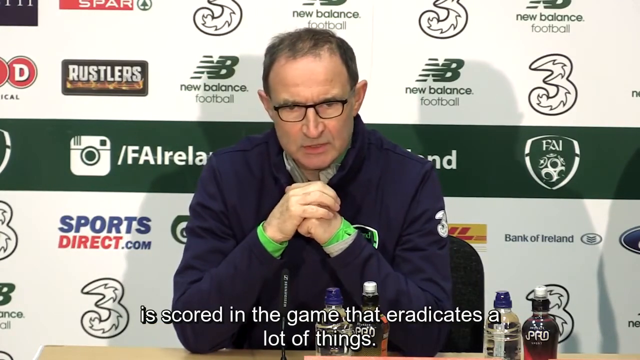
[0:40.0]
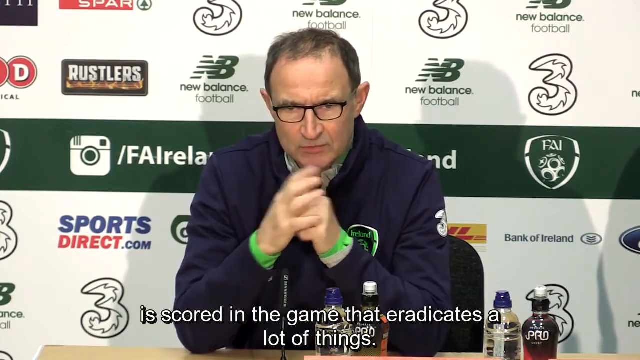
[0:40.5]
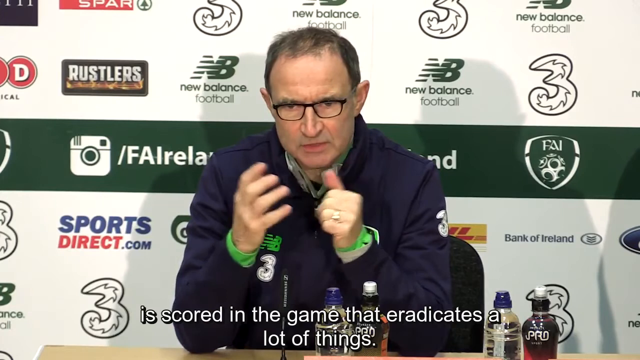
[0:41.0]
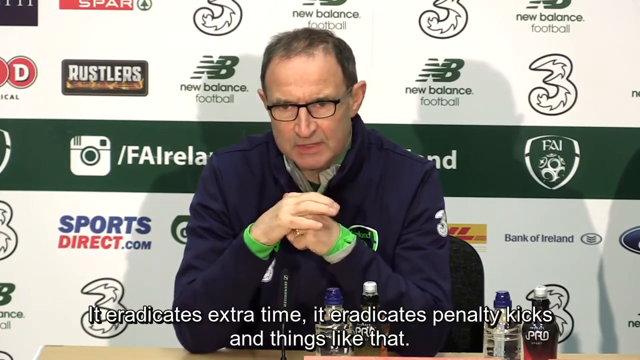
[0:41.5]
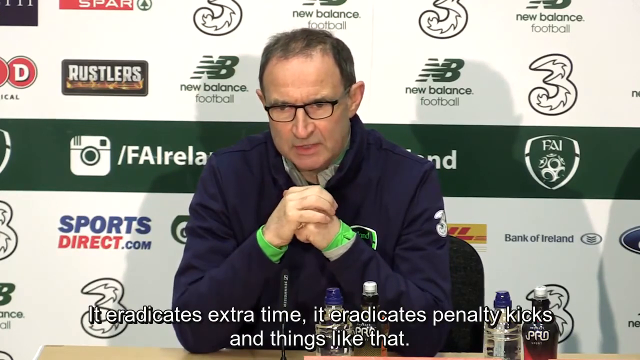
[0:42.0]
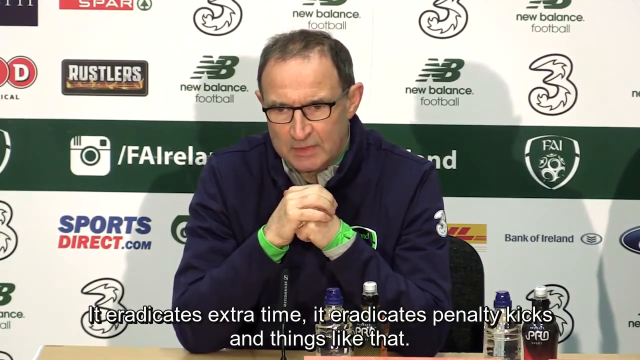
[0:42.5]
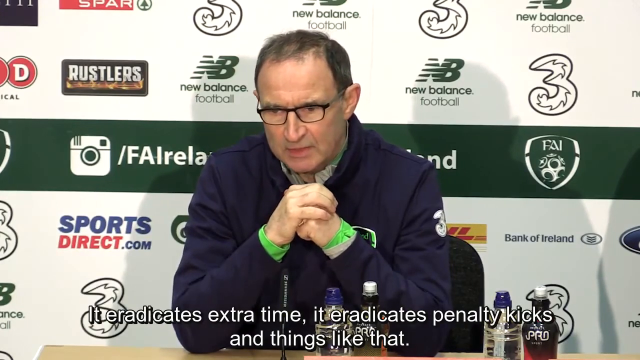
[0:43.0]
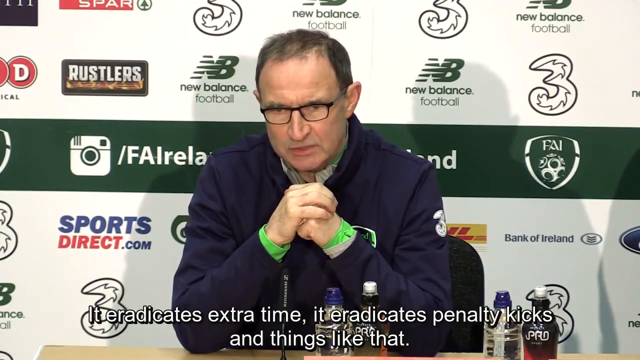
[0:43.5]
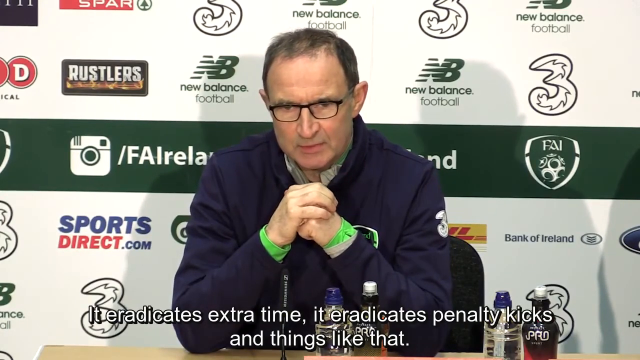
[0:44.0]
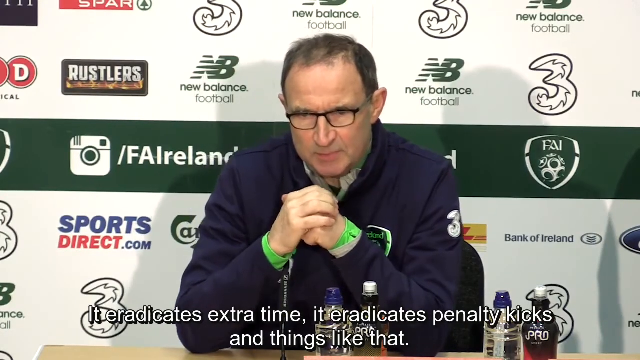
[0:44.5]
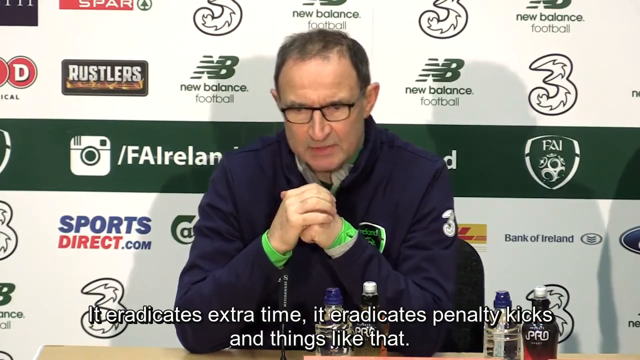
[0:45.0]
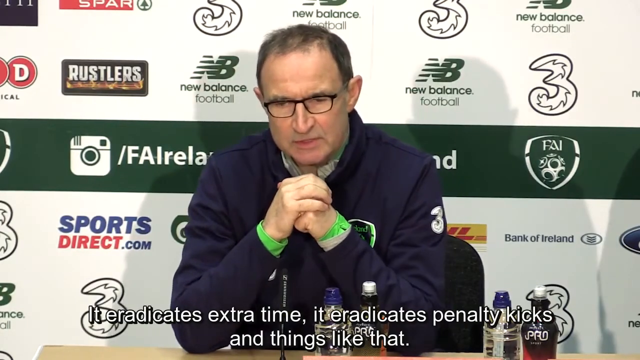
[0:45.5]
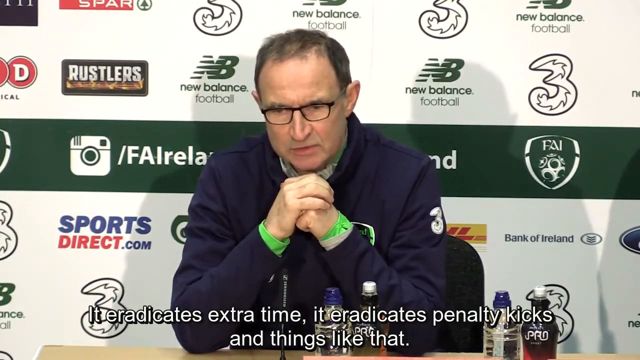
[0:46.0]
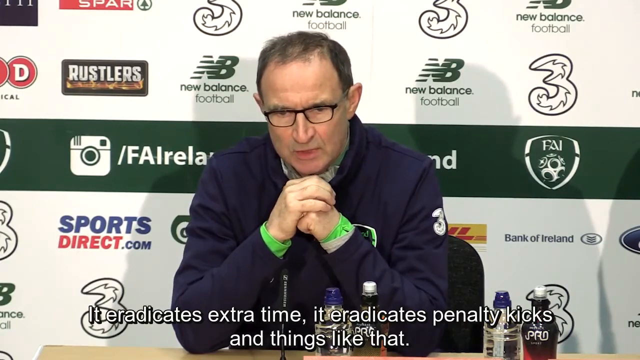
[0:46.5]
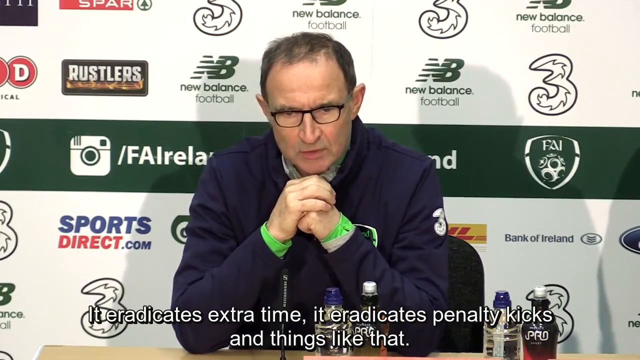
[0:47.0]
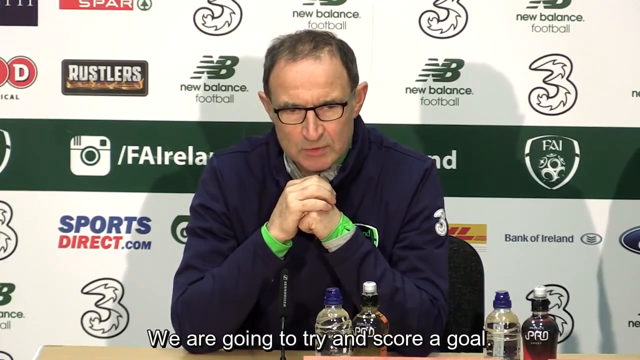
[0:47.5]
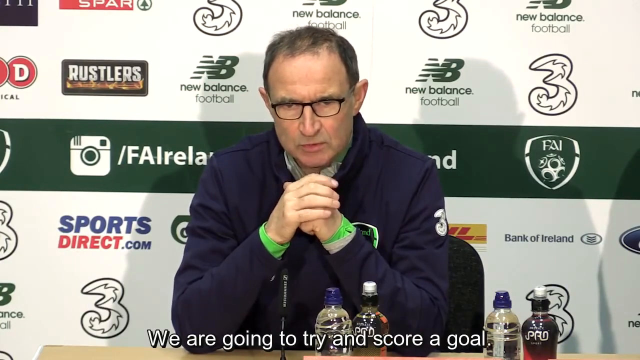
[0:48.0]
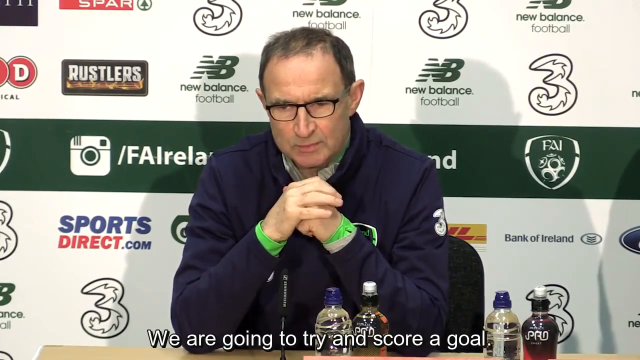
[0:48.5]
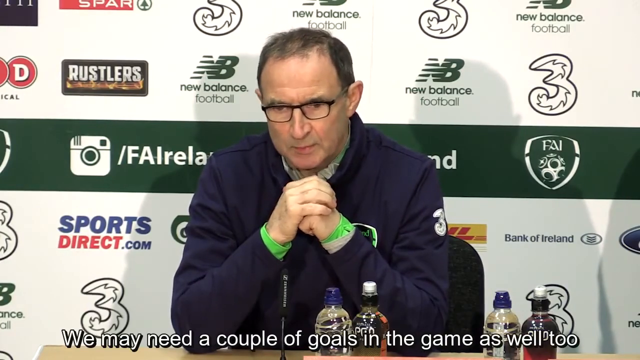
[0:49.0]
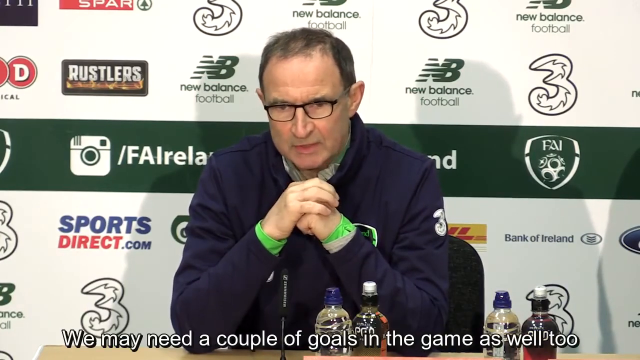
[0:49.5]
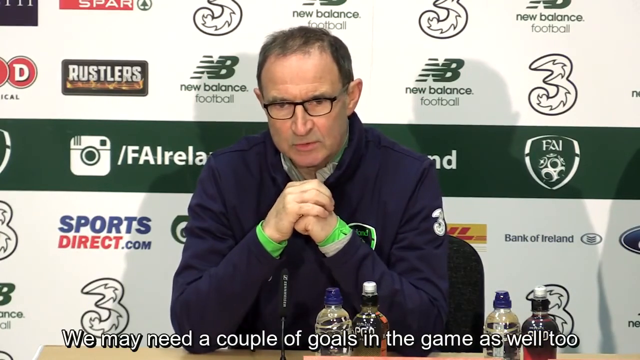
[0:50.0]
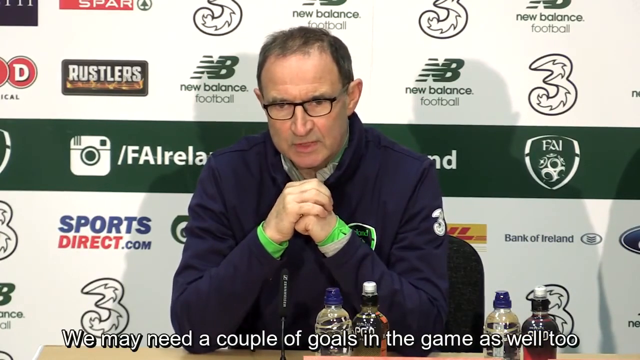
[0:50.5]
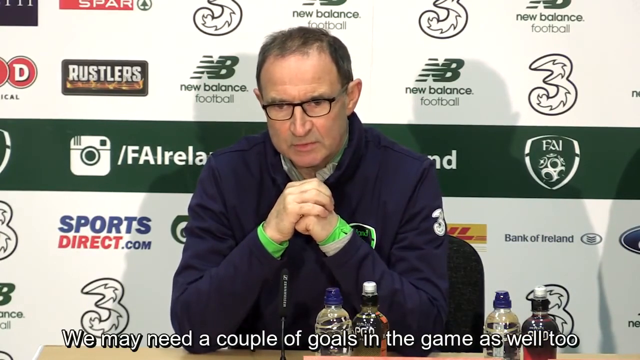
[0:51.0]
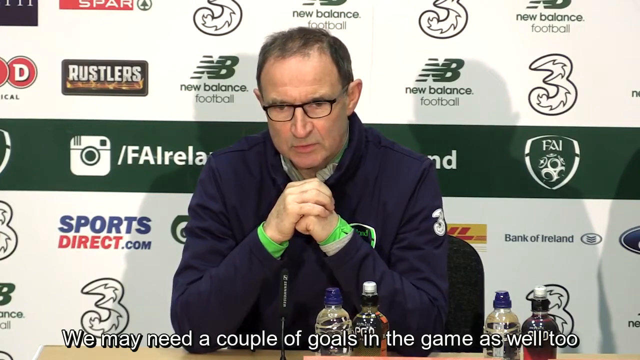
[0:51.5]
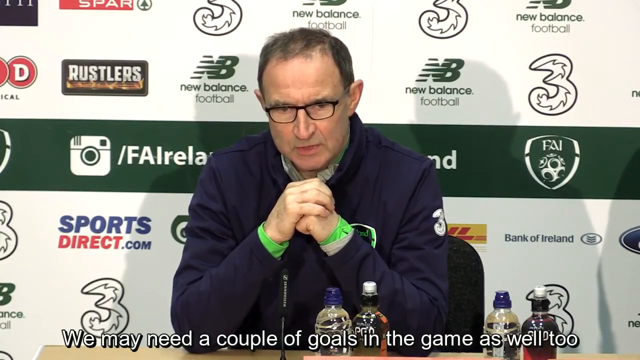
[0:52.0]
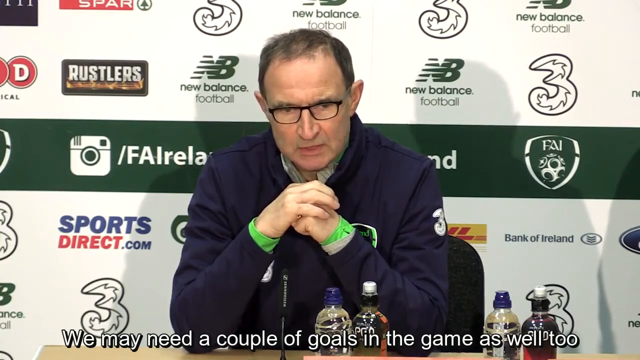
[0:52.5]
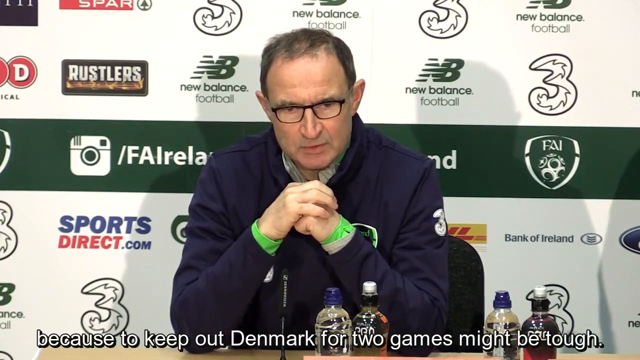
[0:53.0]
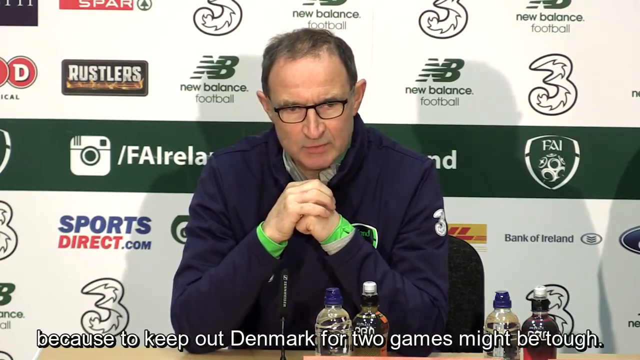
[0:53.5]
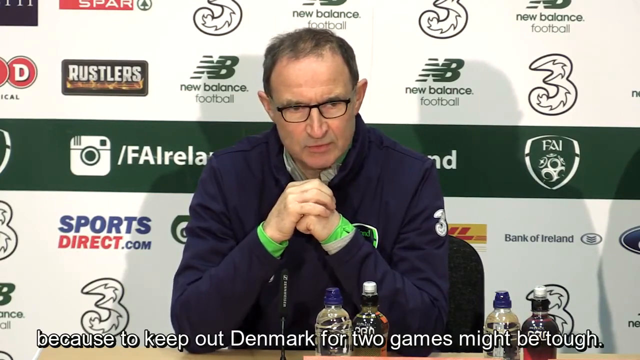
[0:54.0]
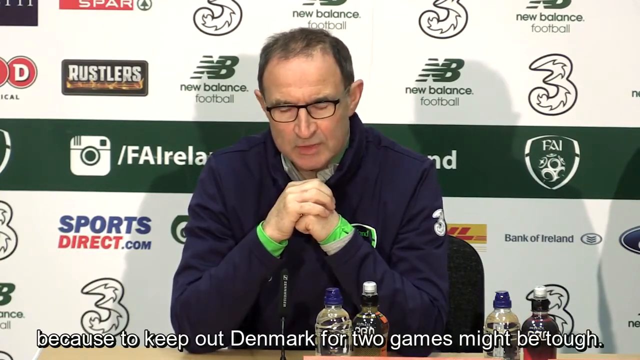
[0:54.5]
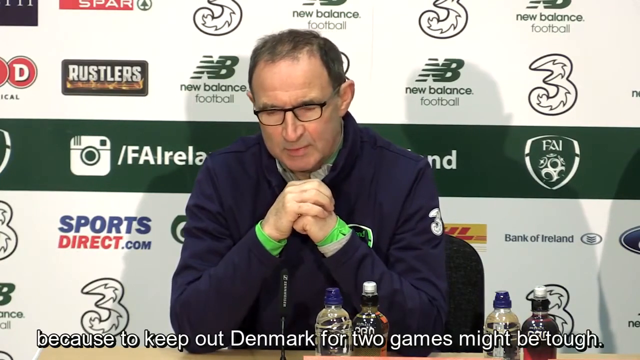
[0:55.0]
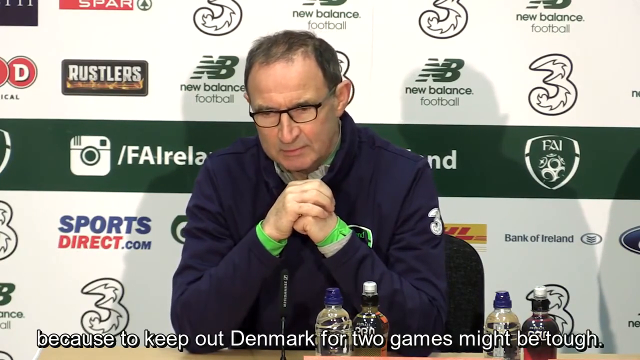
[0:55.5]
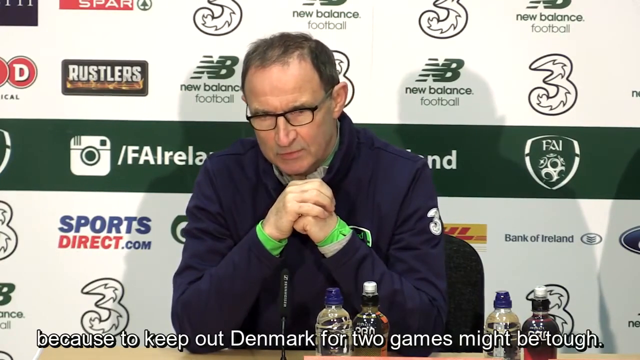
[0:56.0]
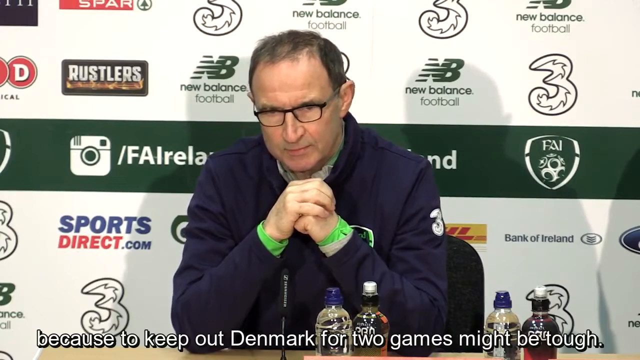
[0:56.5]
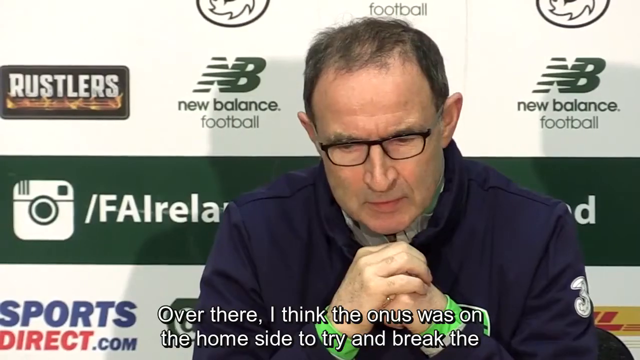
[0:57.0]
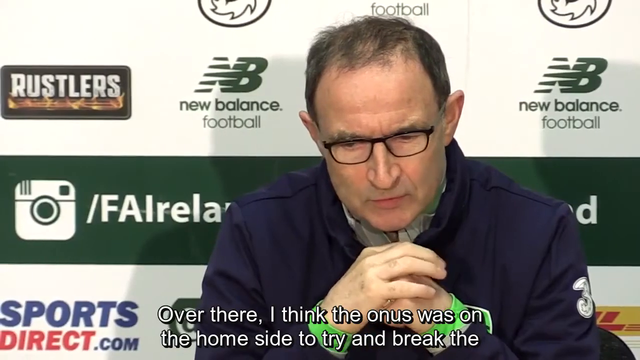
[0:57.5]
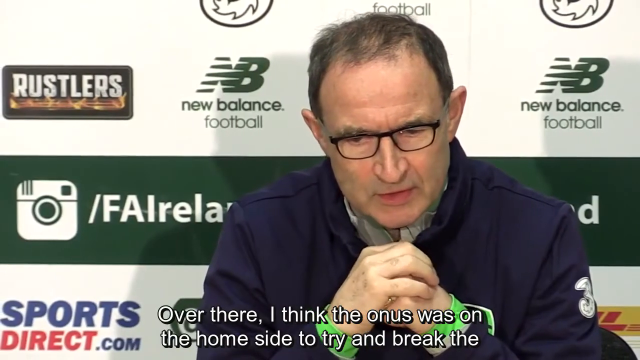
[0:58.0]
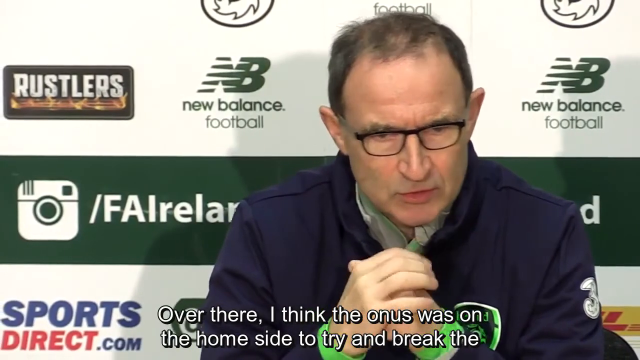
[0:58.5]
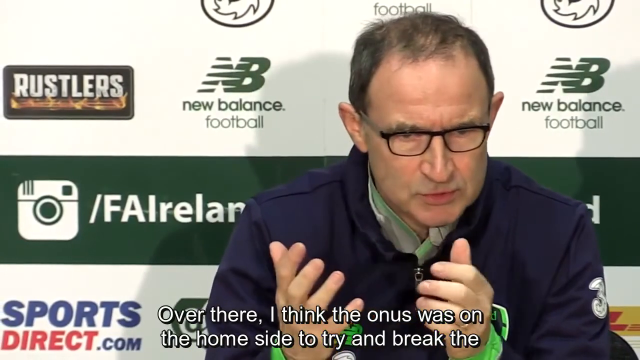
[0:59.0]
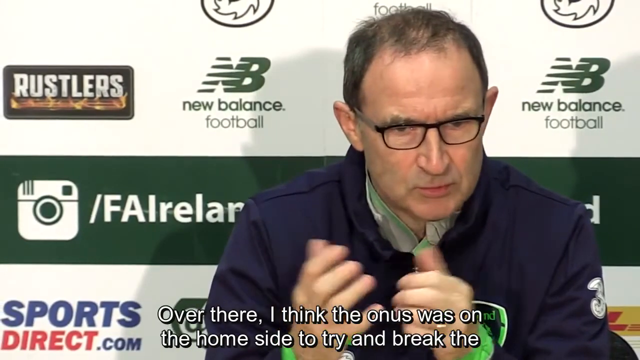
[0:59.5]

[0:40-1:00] A man talks while sitting. He is white, with short black hair, black glasses and no facial hair, wearing a blue shirt, with his hands touching and his elbows on the table. It looks like some sort of sports-related interview. His lips move as he talks; he shakes his head, moves his hands around a little, puts them back together and keeps talking. He looks around a little as he speaks, sometimes down, sometimes to the left, then back to the right, and moves his hands again. Advertisements behind him include New Balance Football, Bank of Ireland, SportsDirect.com and Rustlers. He appears to have a ring on one of his fingers. He appears to be talking about his strategies for winning games and going into some detail on what they plan to do.